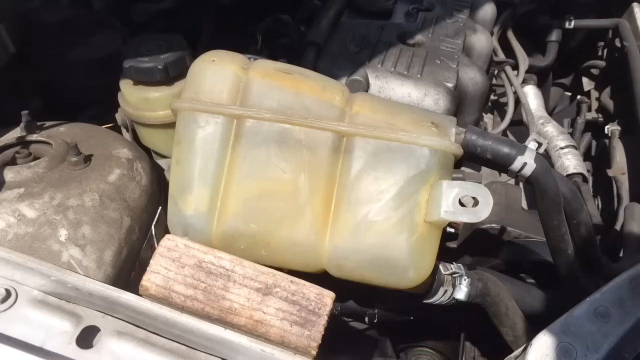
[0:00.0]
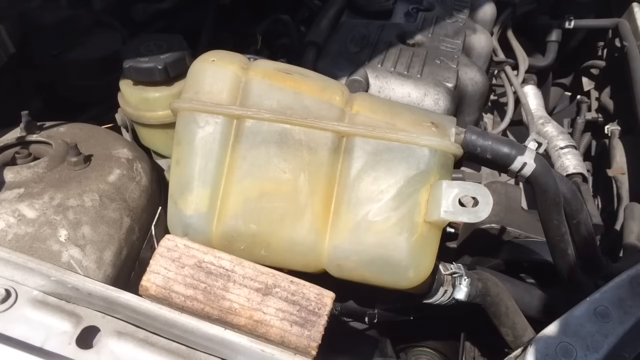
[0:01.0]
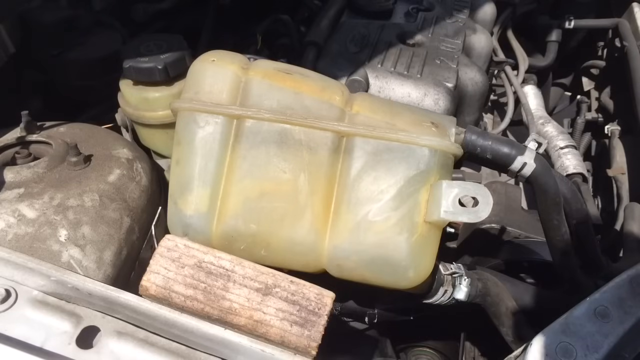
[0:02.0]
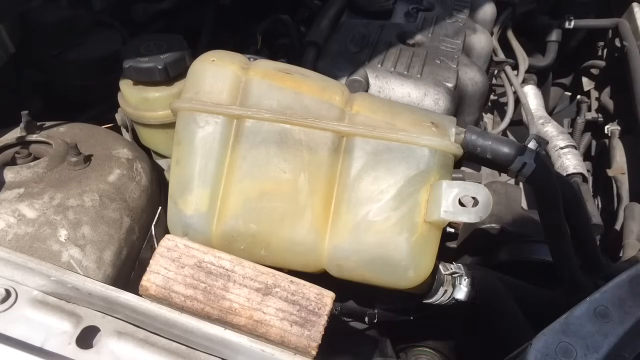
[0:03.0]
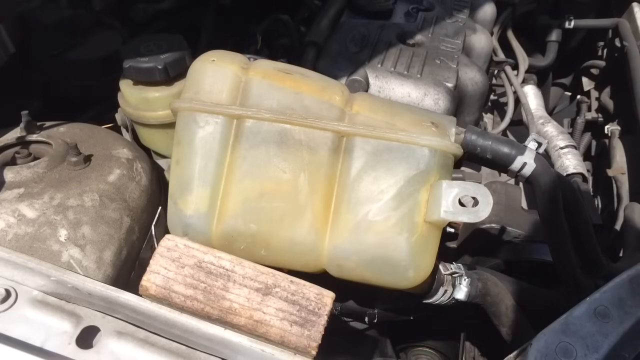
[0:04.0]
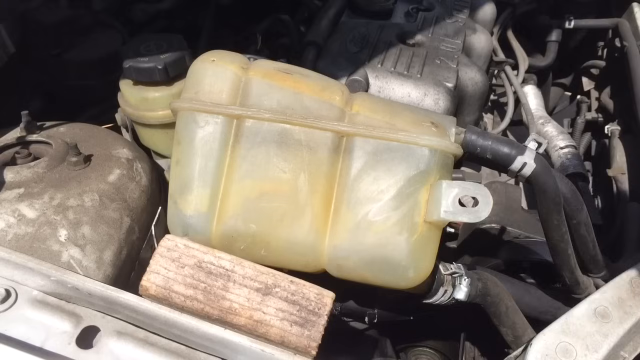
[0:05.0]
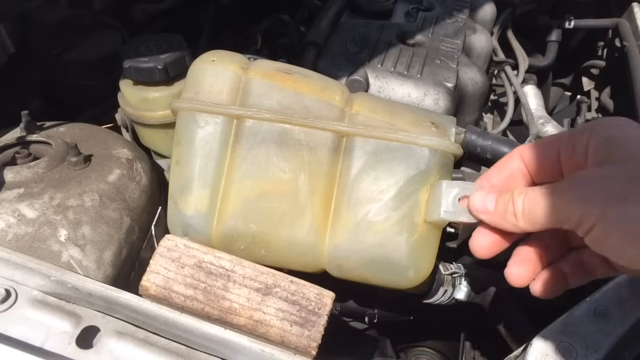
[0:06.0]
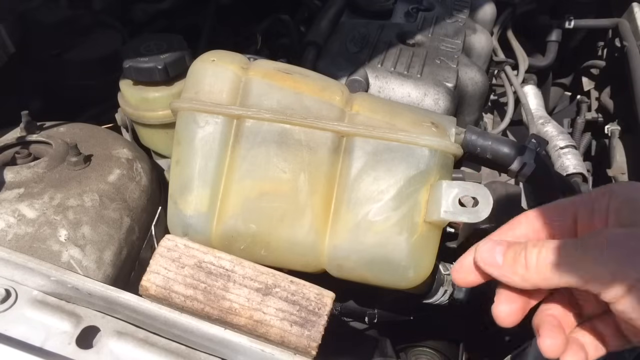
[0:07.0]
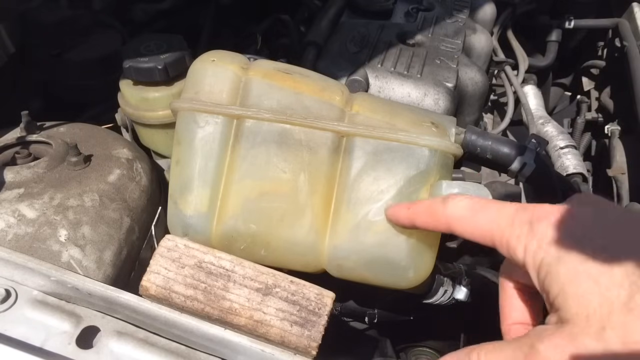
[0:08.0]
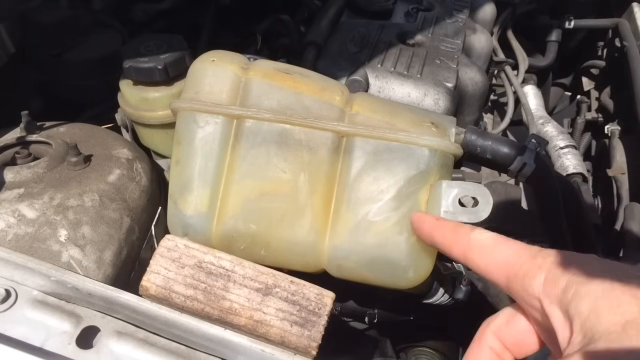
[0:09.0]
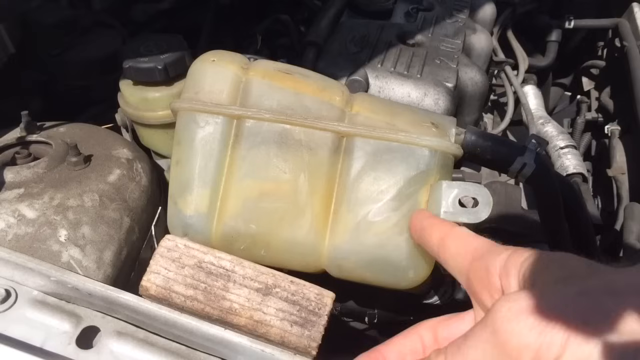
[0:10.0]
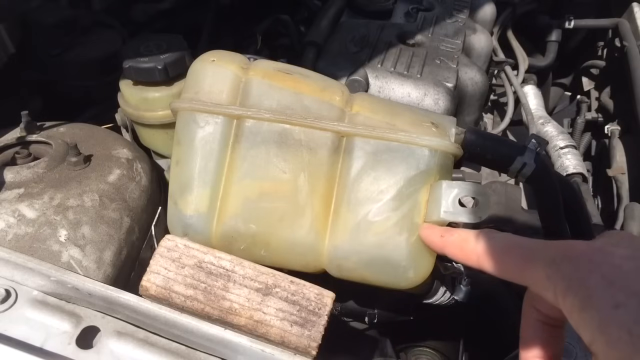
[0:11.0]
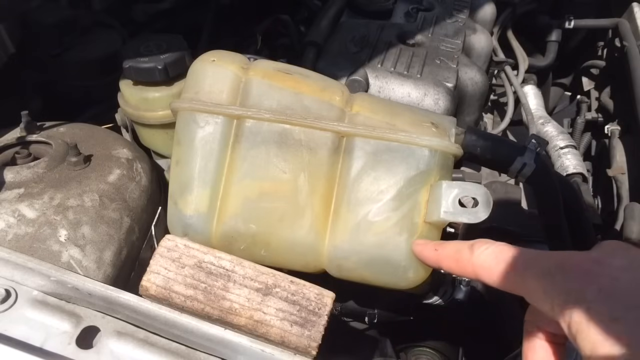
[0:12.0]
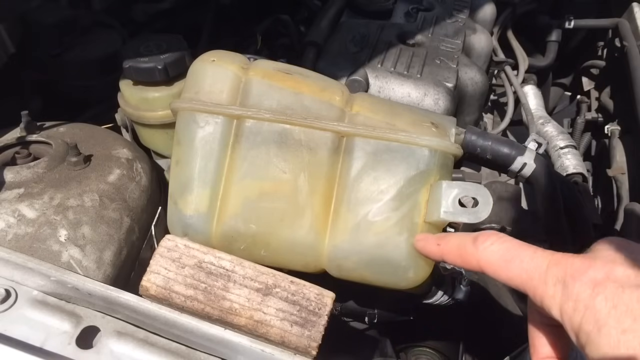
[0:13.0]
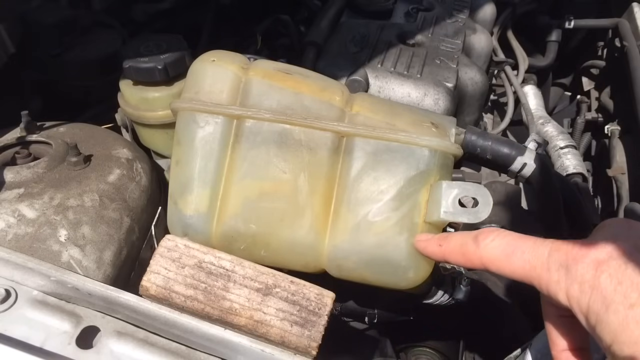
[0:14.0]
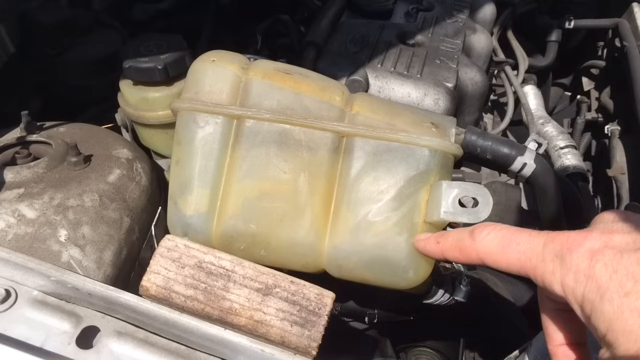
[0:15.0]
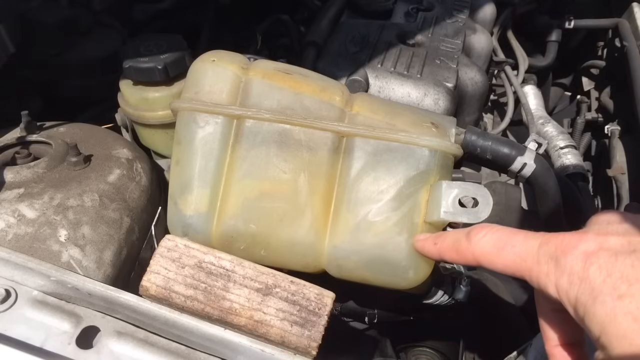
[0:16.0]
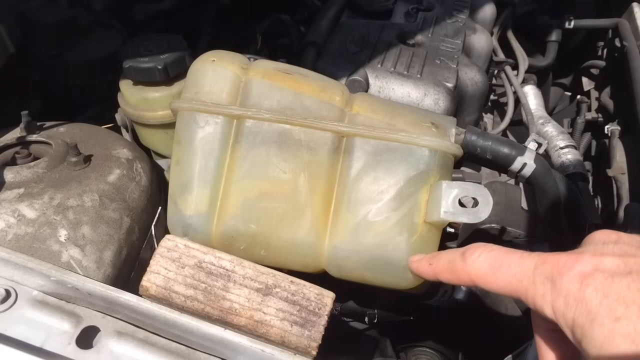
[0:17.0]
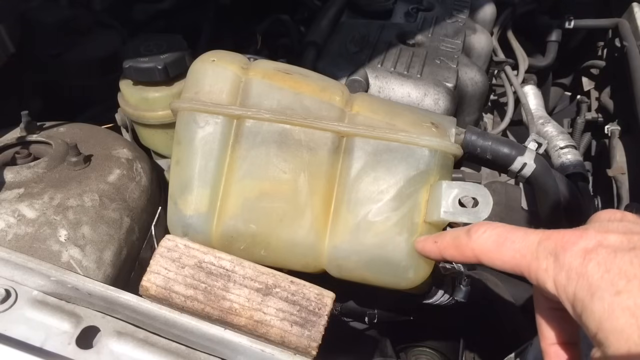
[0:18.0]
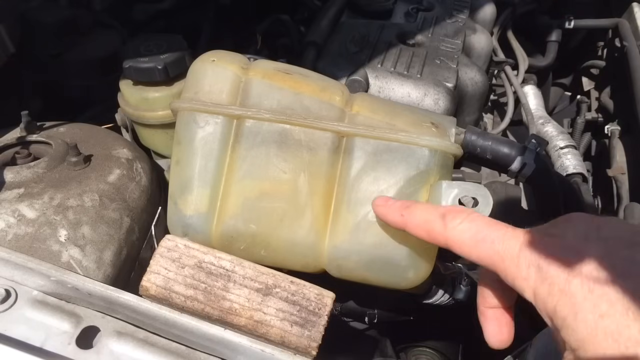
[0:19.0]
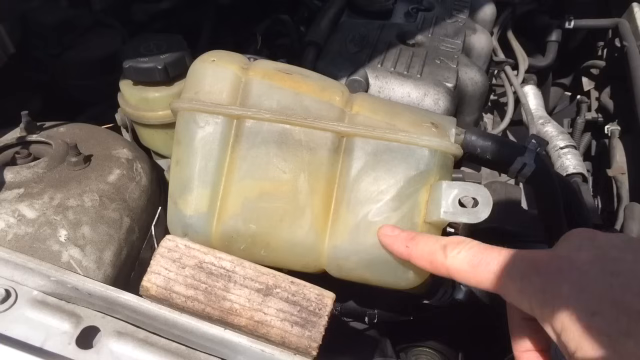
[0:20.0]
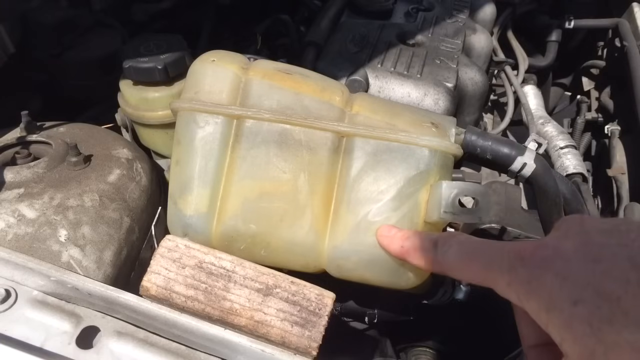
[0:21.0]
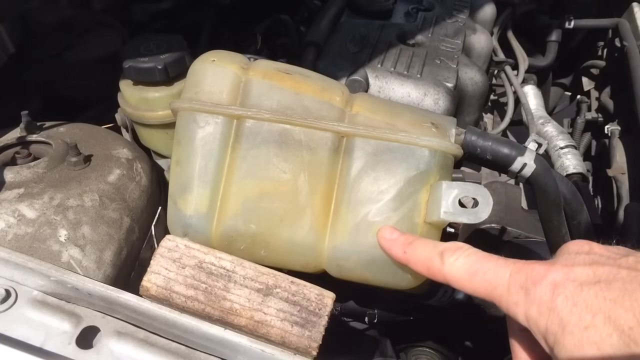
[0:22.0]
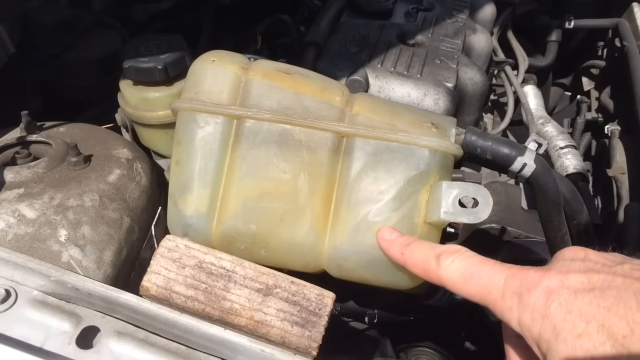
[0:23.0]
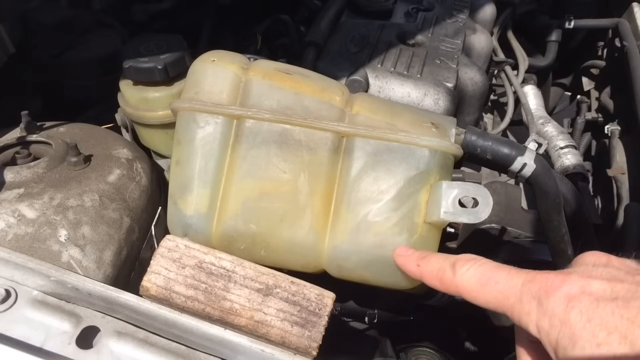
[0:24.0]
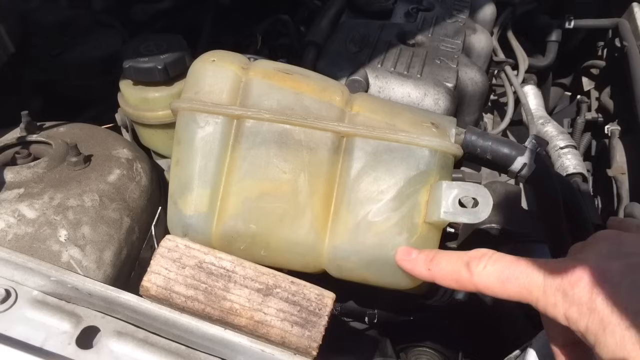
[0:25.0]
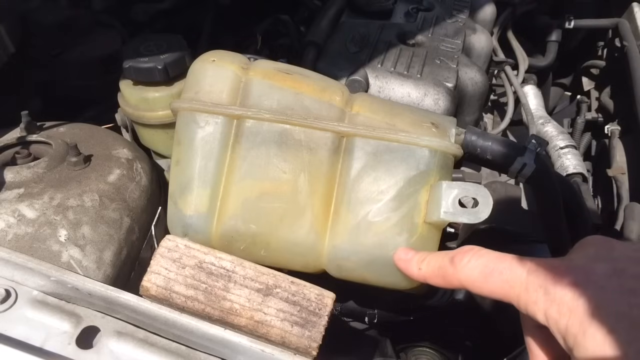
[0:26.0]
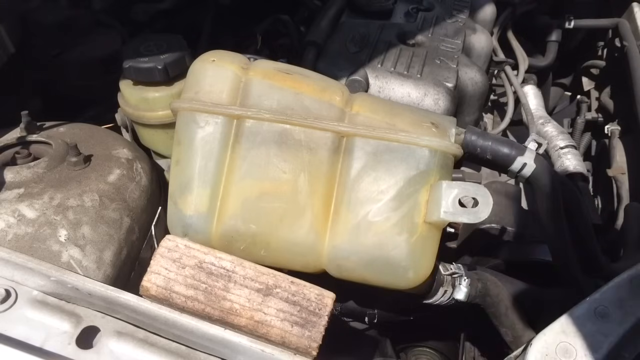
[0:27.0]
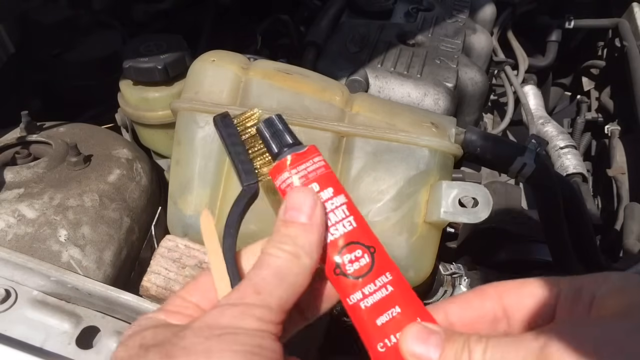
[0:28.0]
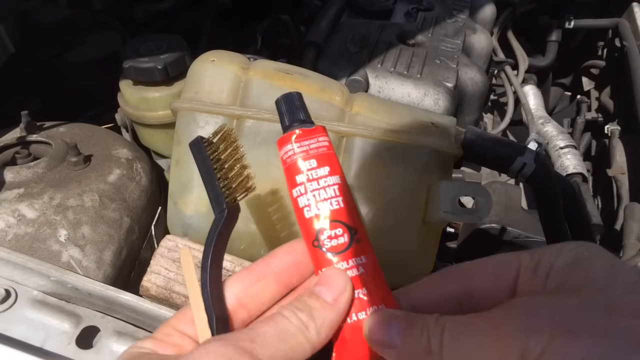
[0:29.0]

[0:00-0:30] The video opens on the engine bay of an automobile, with a large amount of sunlight shining down on it, apparently outdoors. At the front of the engine is a large coolant reservoir made of beige, see-through plastic. Black rubber hoses are connected to it, and the large manifold and engine are in the middle of the vehicle. To the left side are the power steering reservoir, the strut towers and intake manifolds, and there is a block of wood at the front by the radiator. A human shadow starts to move on the front of the engine, and then a light-skinned Caucasian hand reaches in, touches the coolant reservoir and grabs the end tag. After pulling a little, the hand lets go of the tag and points with its index finger toward the edge of the coolant reservoir, motioning at this corner and moving the finger back and forth.